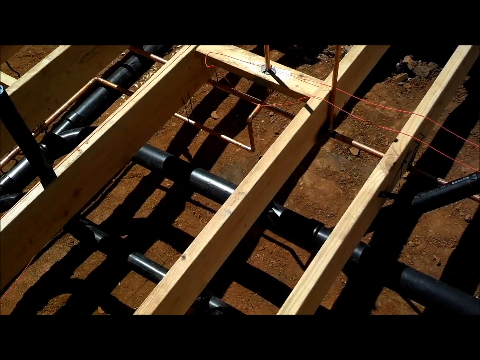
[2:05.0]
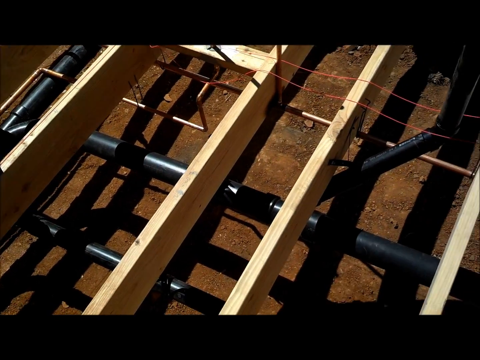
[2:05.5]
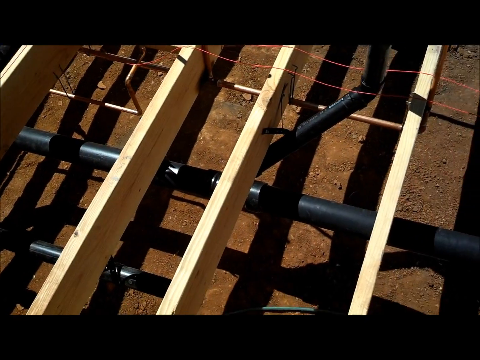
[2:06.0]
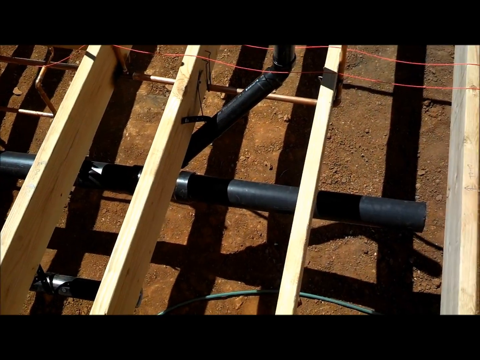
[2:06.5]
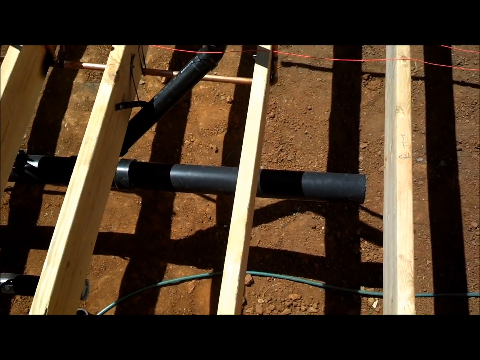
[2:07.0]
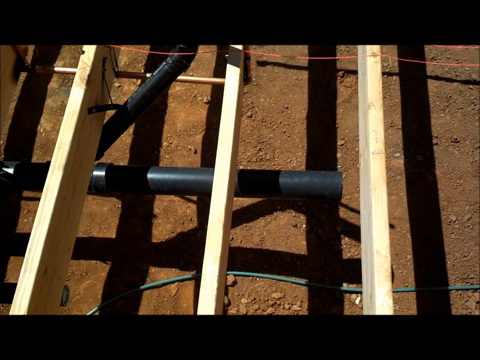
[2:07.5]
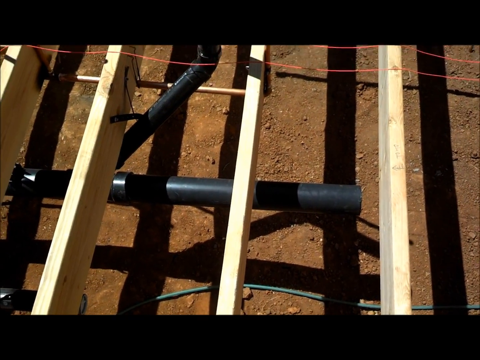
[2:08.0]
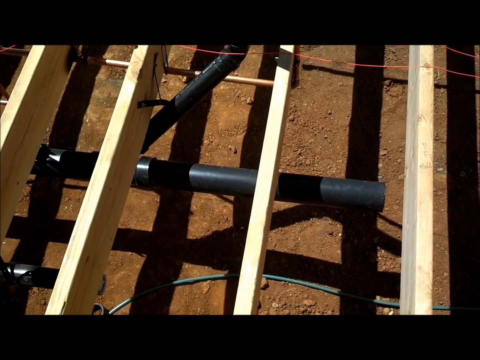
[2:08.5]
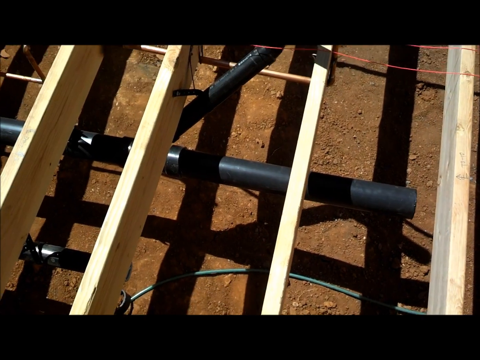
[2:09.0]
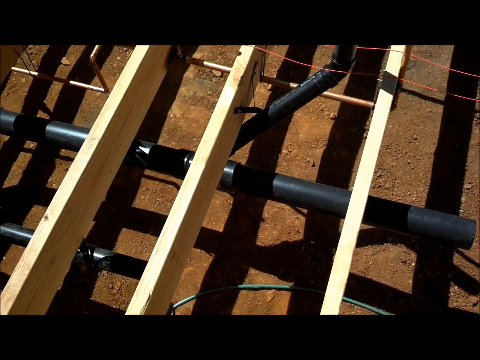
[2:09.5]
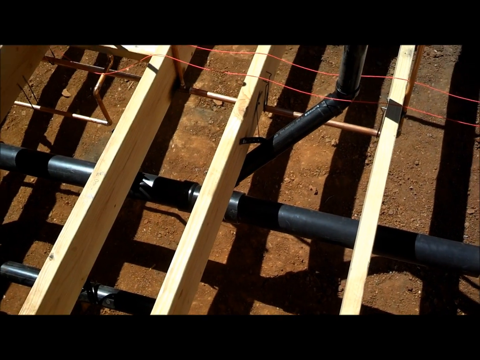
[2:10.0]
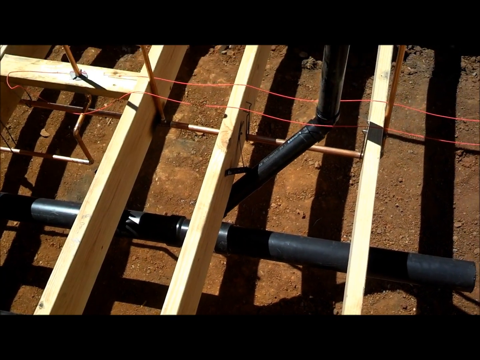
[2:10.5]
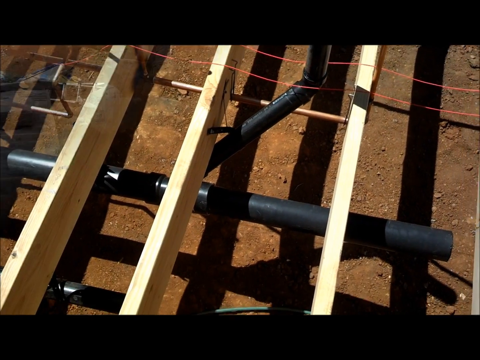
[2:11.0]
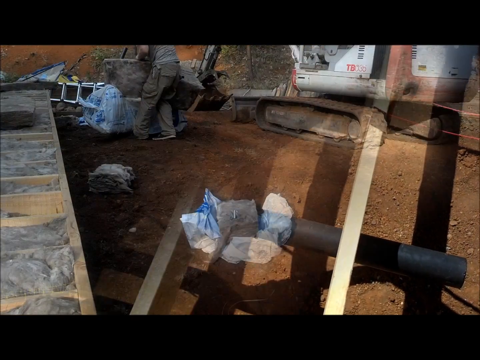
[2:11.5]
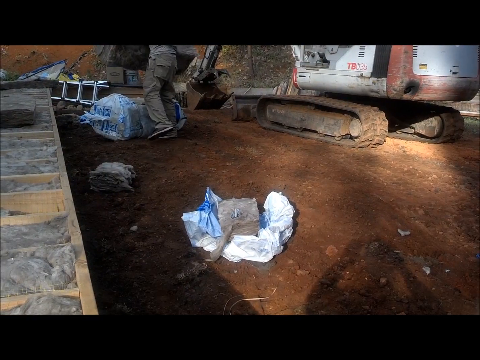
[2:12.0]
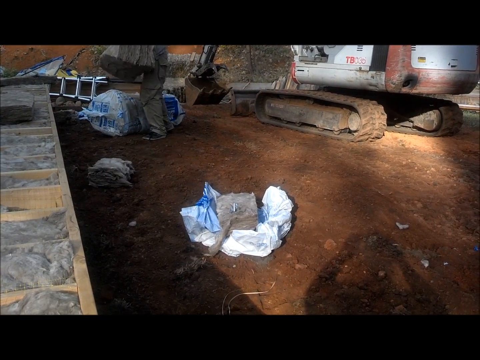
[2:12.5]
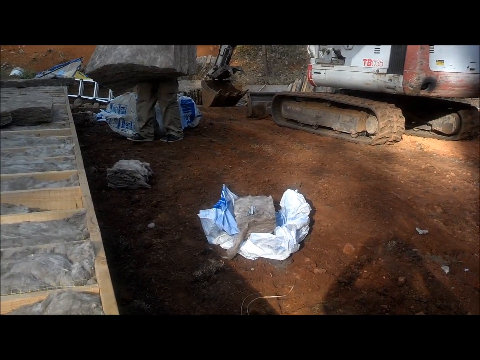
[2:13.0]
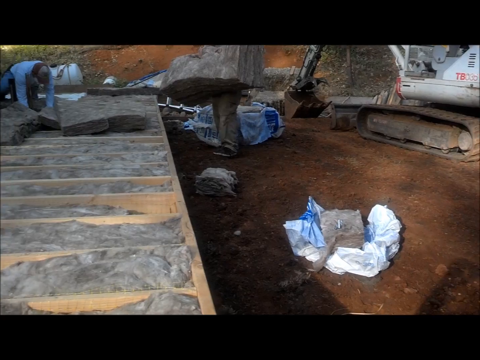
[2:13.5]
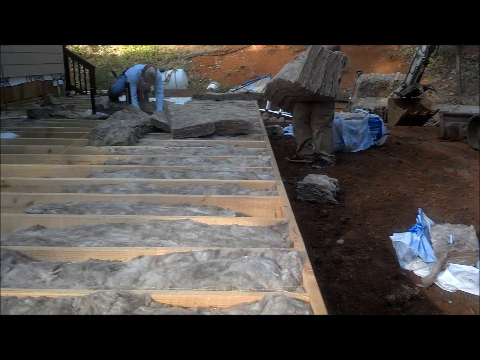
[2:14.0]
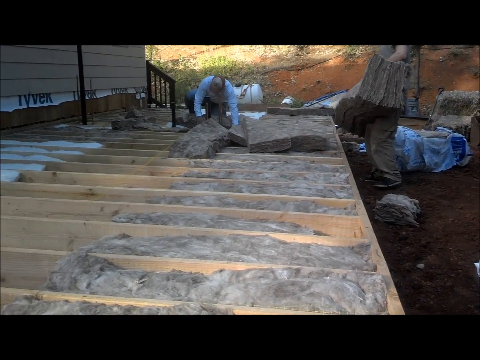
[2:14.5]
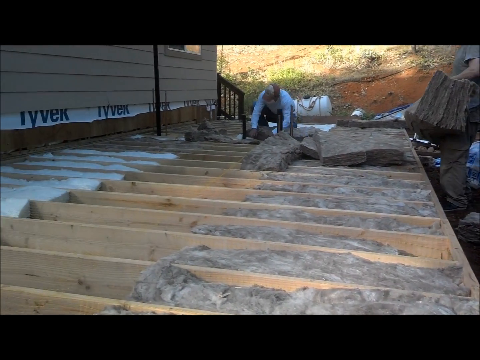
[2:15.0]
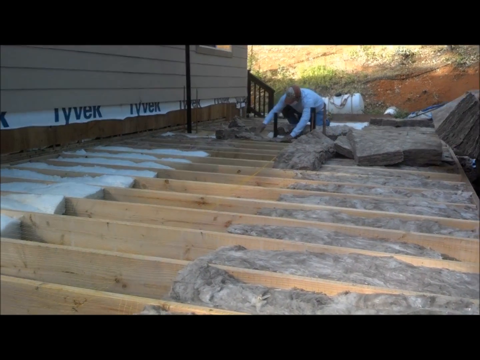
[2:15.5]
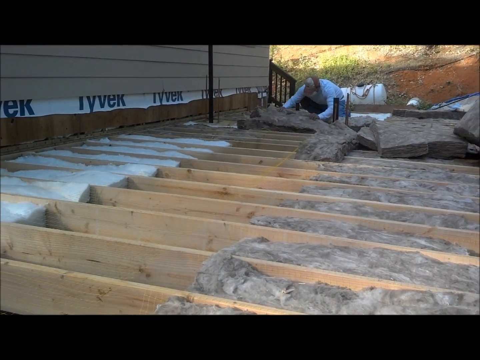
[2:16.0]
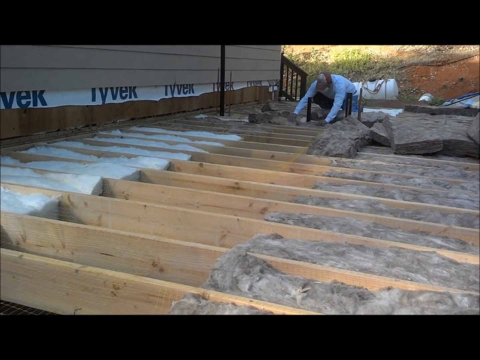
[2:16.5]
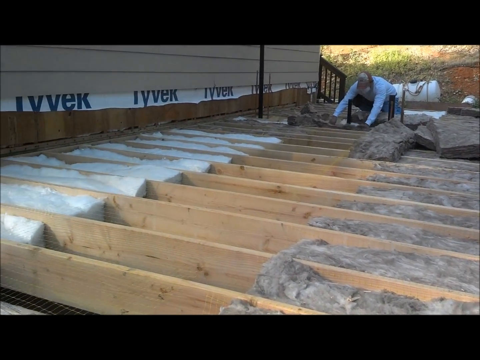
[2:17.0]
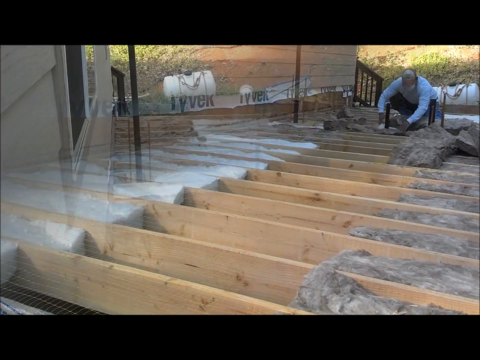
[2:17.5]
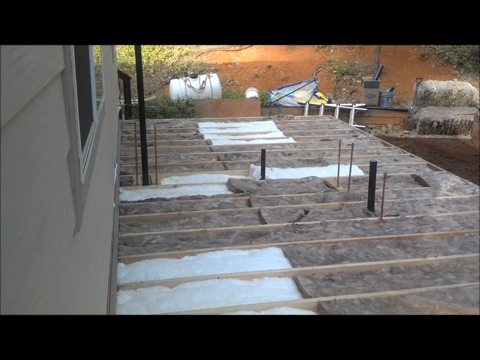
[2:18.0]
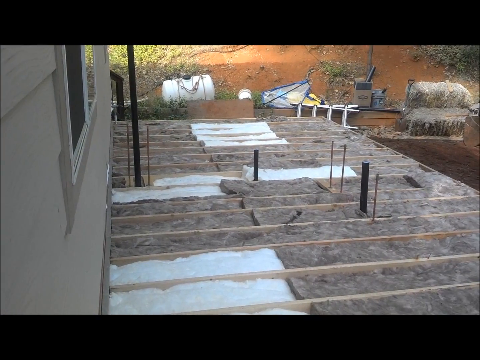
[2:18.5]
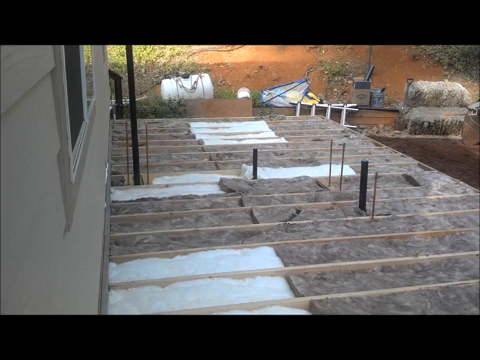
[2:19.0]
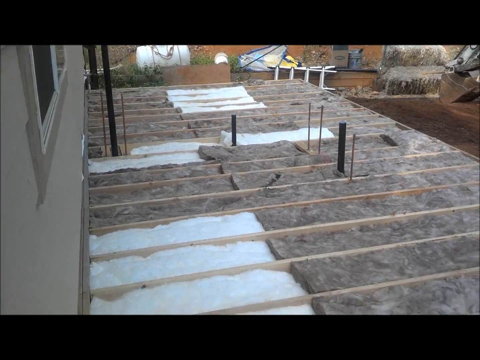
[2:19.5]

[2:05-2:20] The layout of the pipes is shown, and then insulation is apparently stuffed into the spaces between the wood, covering the floors, the pipes and the wires, until by the end all of the flooring is insulated. At the end, links to other videos appear, including one reading "House Edition 2". Two clips or channels are shown, one of them with what looks like a bald, middle-aged man in his mid-40s wearing glasses.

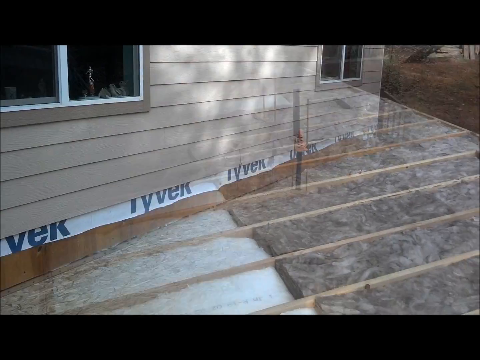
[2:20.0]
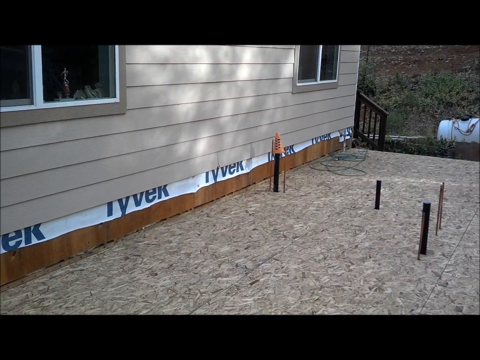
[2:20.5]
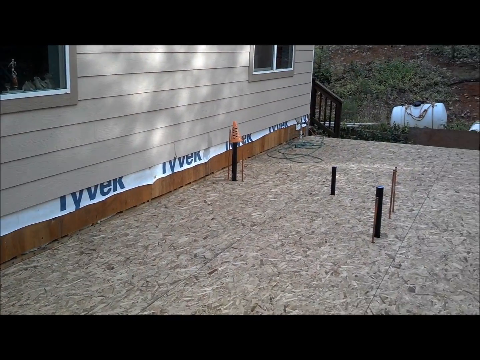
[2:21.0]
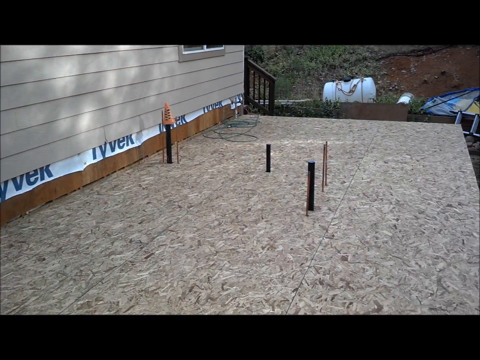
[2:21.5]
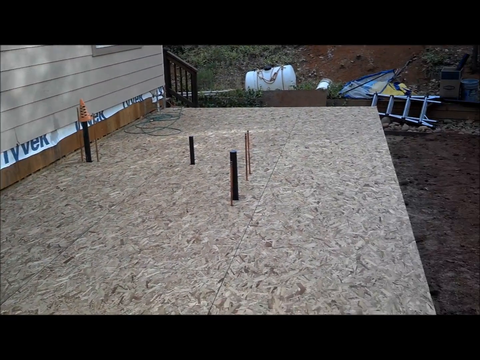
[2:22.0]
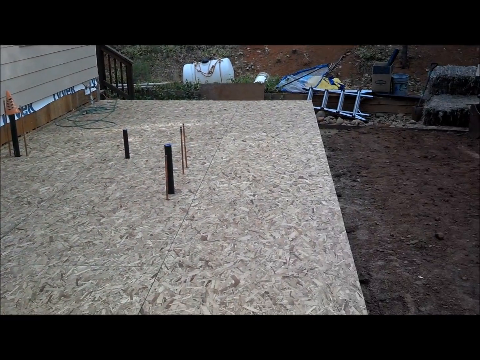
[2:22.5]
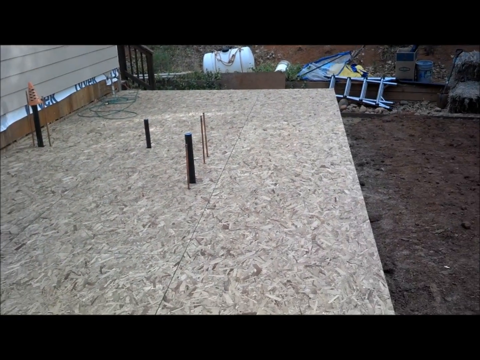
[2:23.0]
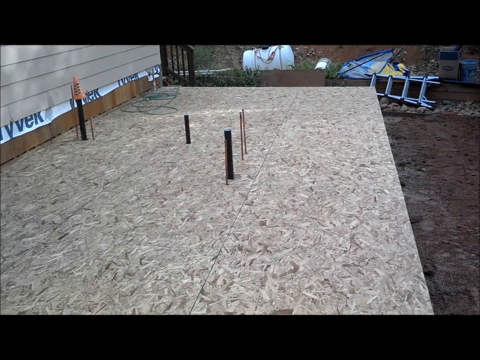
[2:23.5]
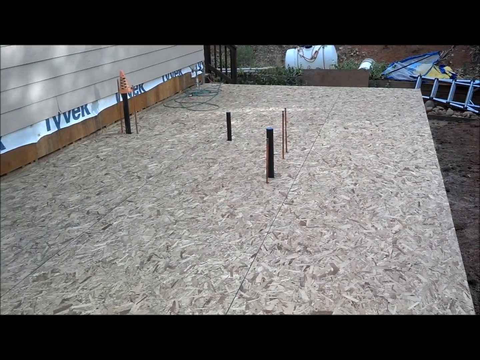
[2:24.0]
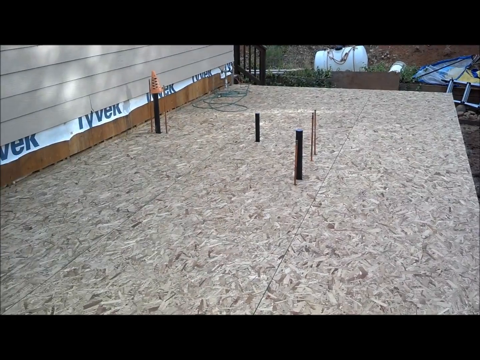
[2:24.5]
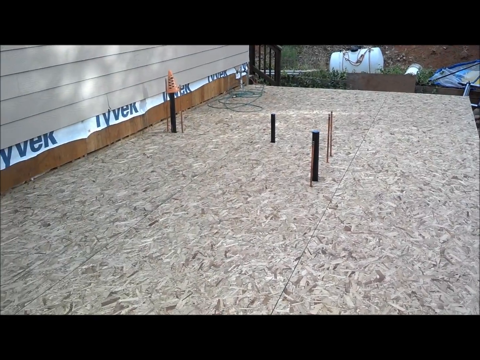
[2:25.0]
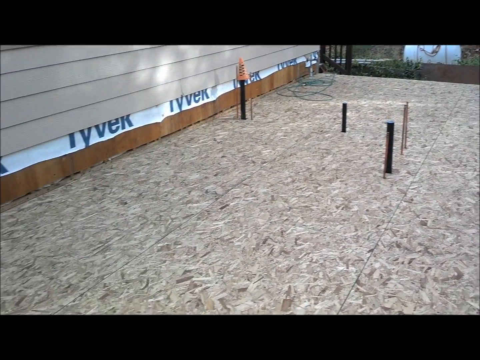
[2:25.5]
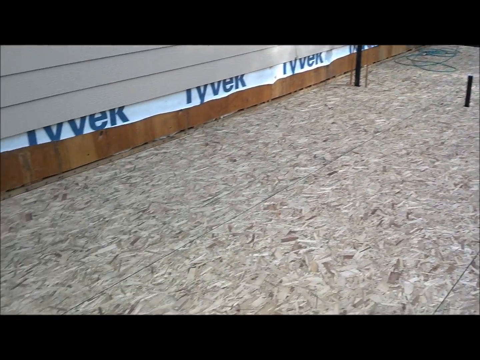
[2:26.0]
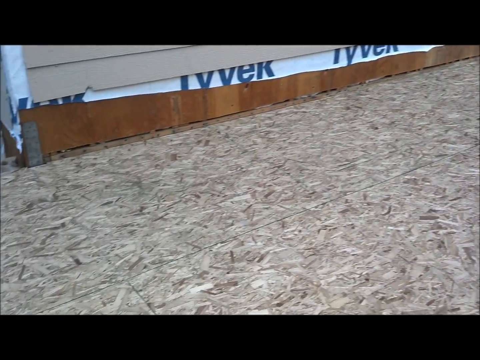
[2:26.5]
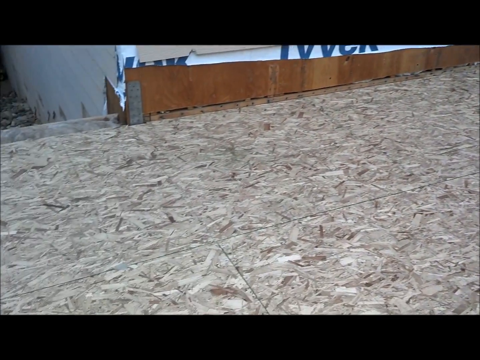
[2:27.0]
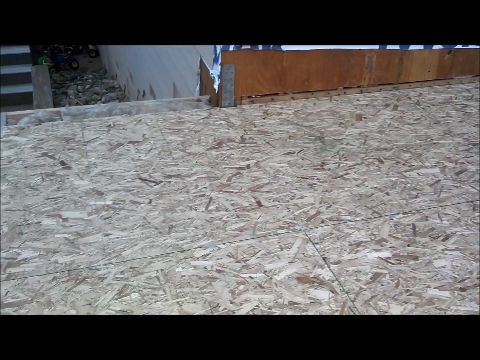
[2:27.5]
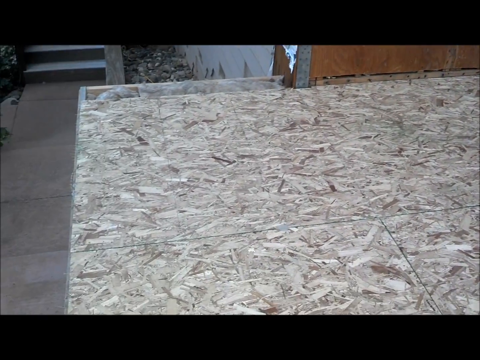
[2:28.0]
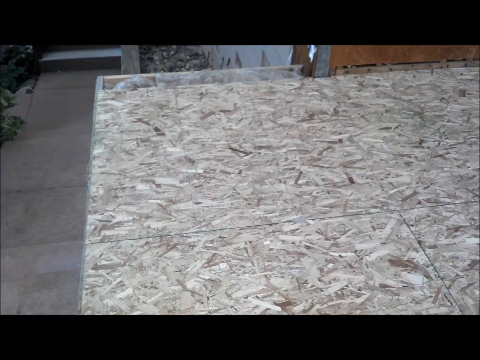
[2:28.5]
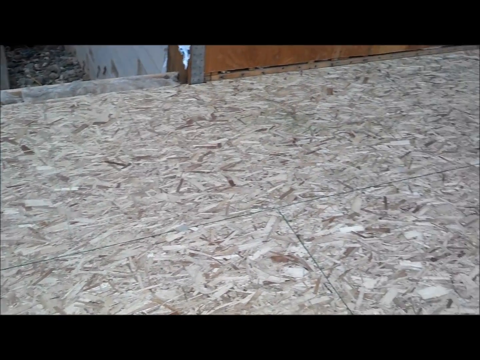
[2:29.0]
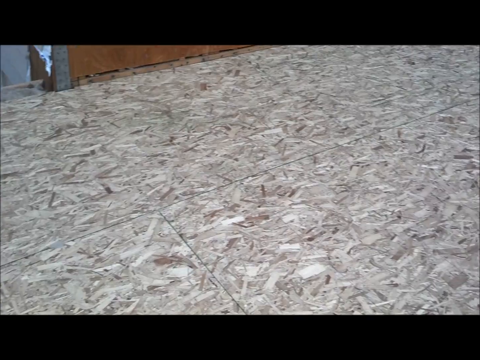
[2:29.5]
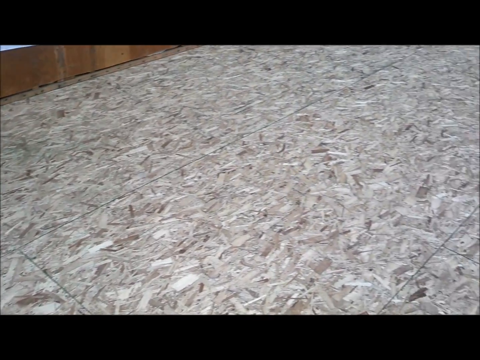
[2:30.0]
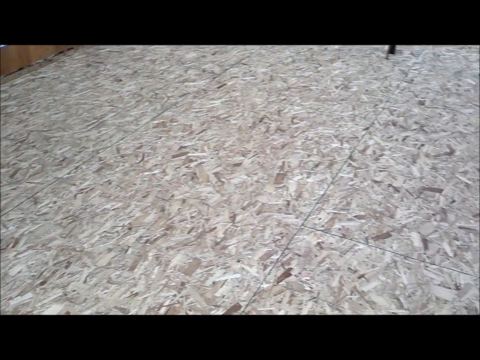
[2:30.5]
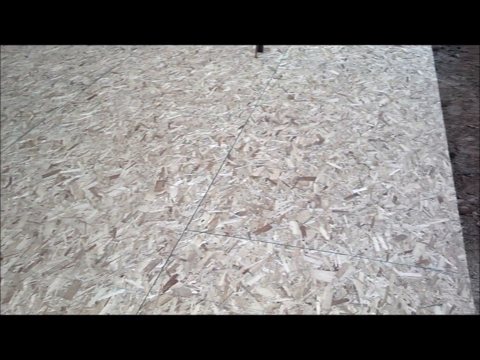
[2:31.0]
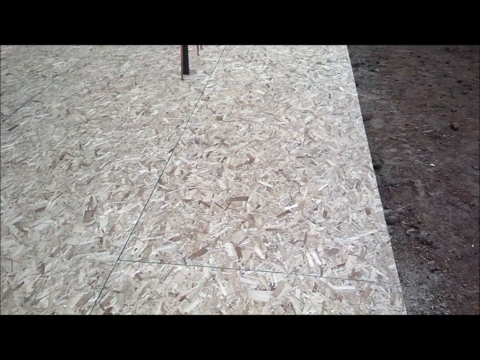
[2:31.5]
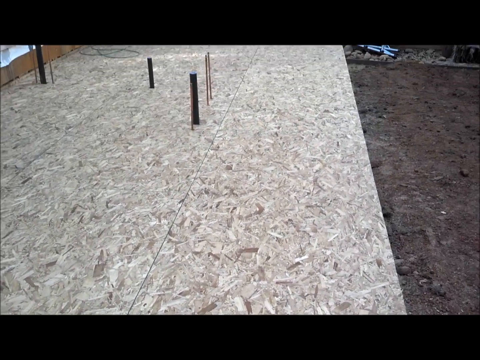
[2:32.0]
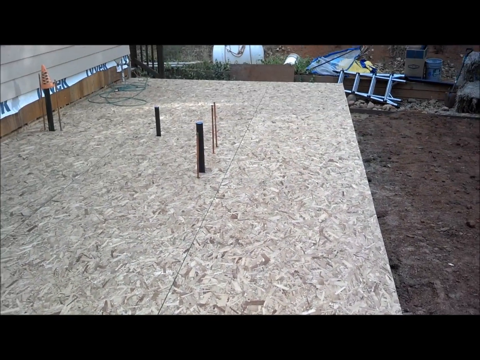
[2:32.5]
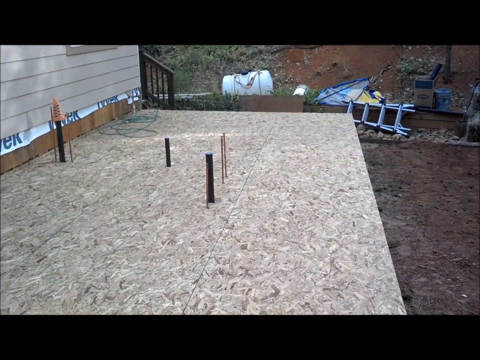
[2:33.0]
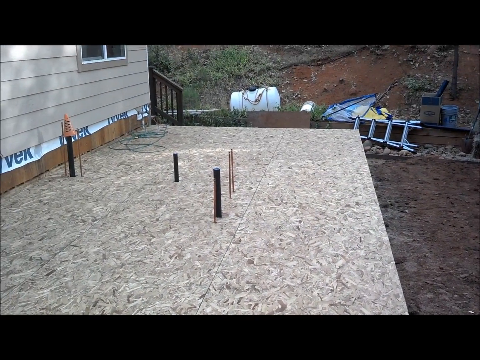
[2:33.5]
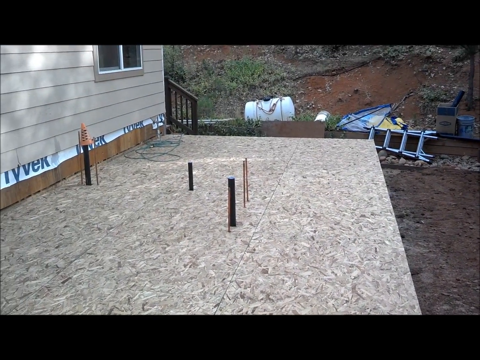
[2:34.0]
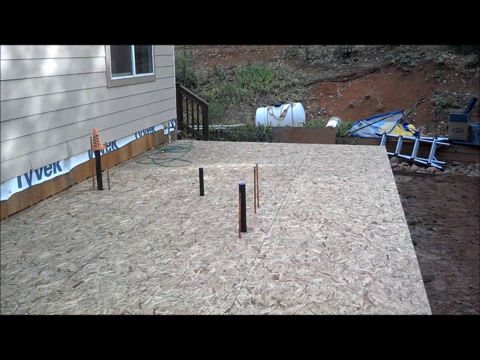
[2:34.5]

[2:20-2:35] White lettering names the house addition and subfloor, along with a YouTube channel by a bald white man who looks middle-aged in his profile picture. The finished subfloor is shown covered in plywood, except for a couple of pipes sticking up from the ground and a few tubes coming out in the middle, which look electrical.